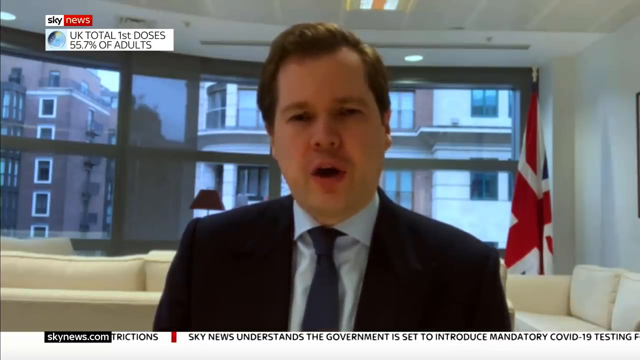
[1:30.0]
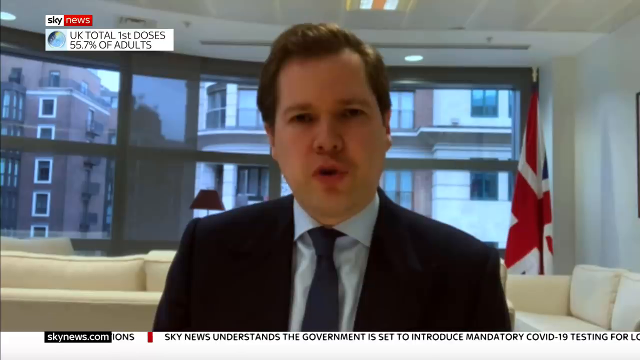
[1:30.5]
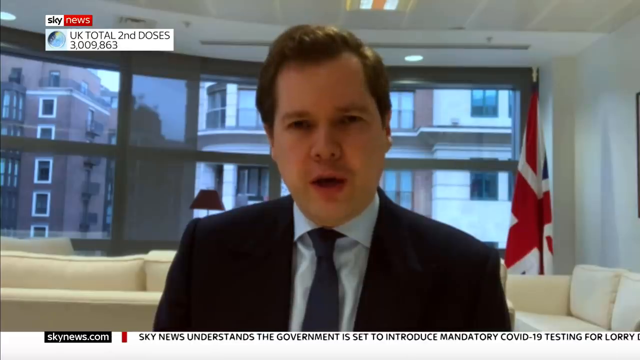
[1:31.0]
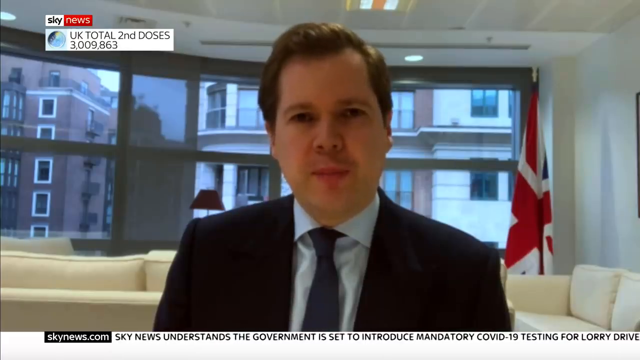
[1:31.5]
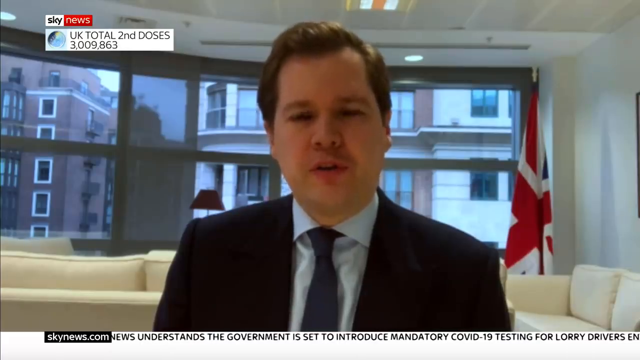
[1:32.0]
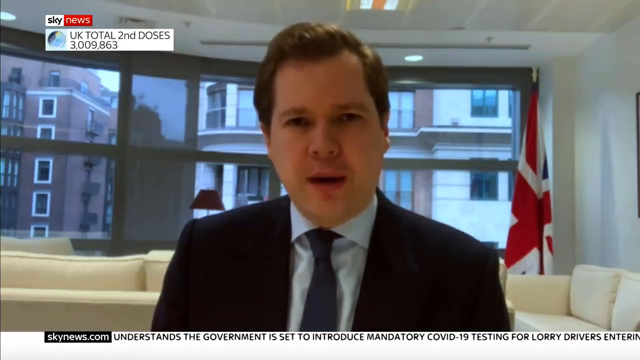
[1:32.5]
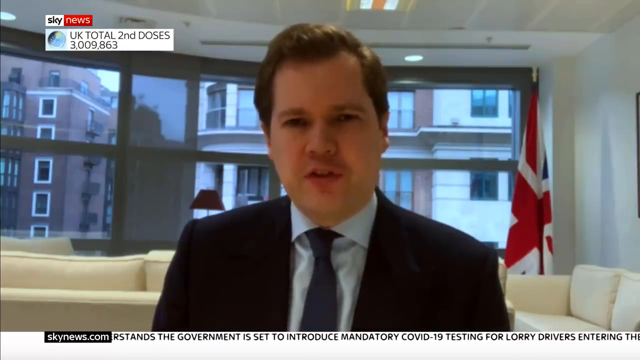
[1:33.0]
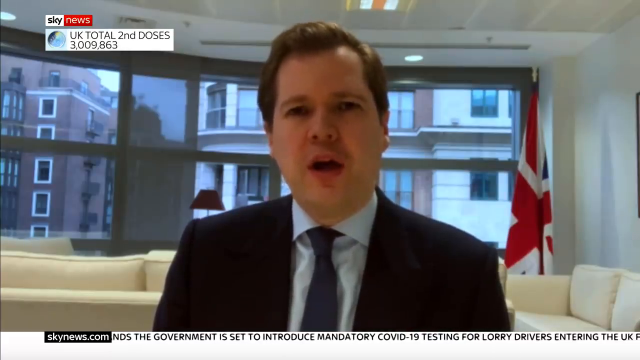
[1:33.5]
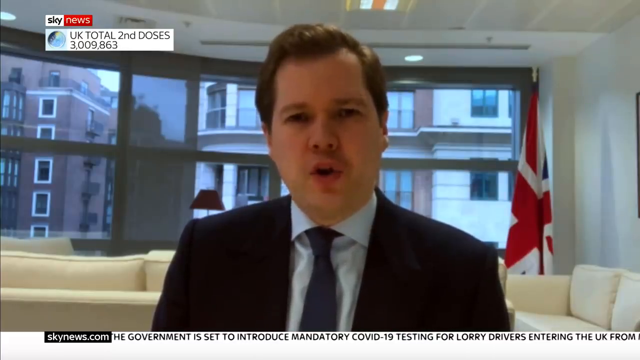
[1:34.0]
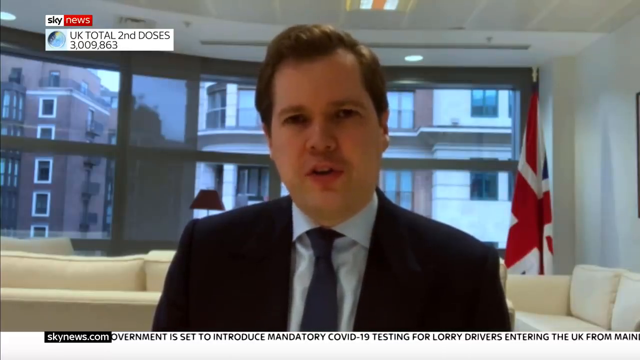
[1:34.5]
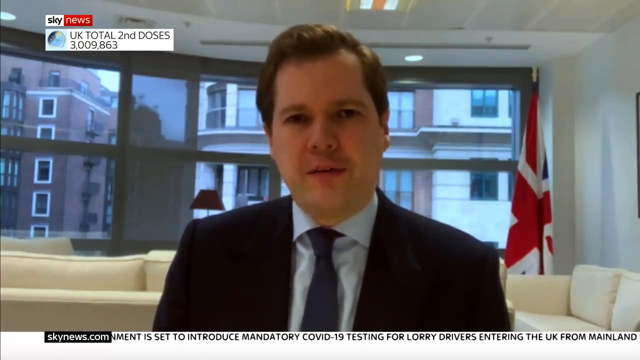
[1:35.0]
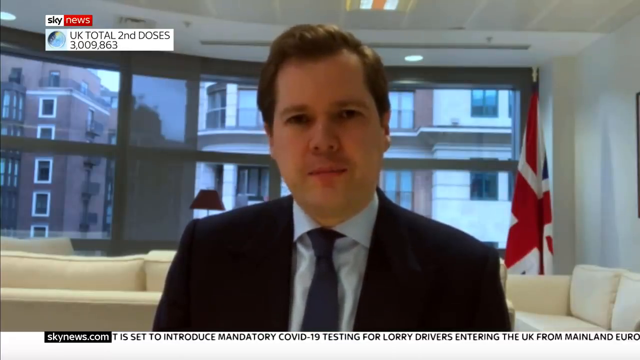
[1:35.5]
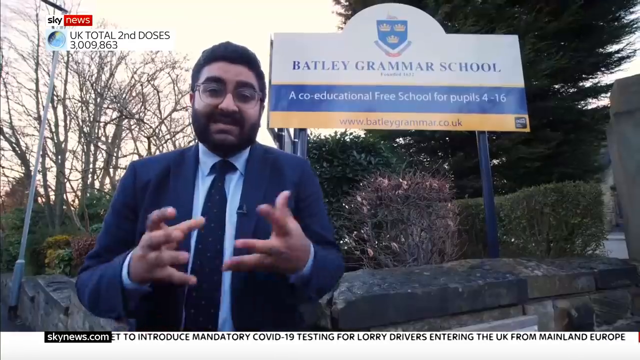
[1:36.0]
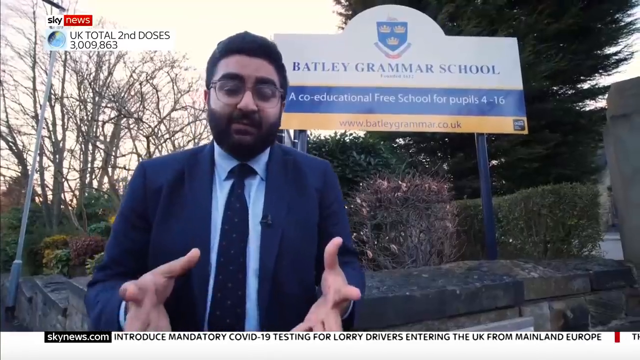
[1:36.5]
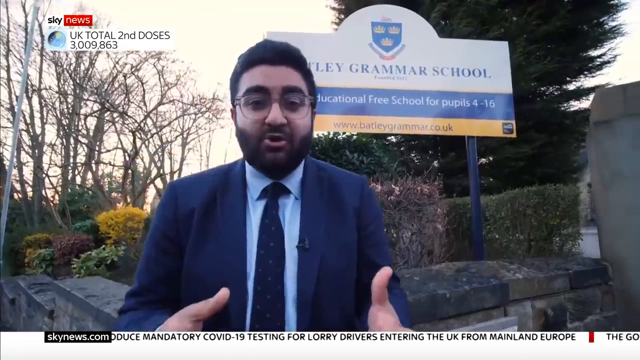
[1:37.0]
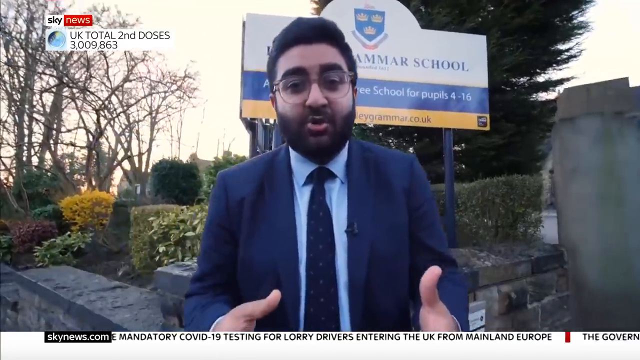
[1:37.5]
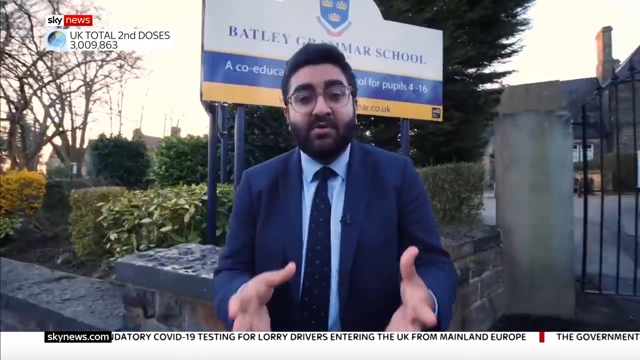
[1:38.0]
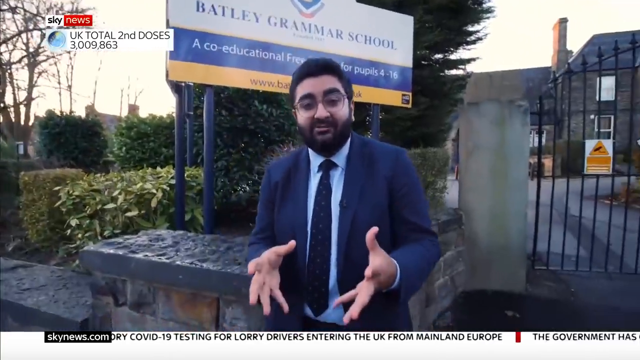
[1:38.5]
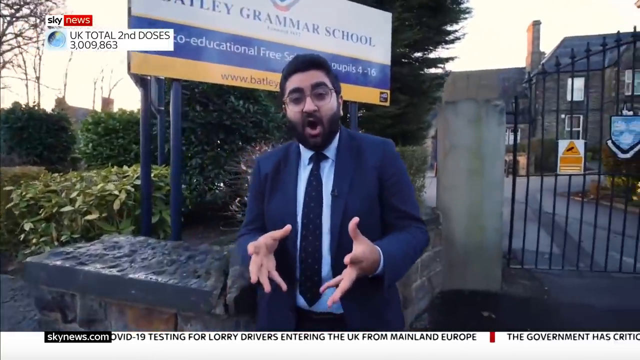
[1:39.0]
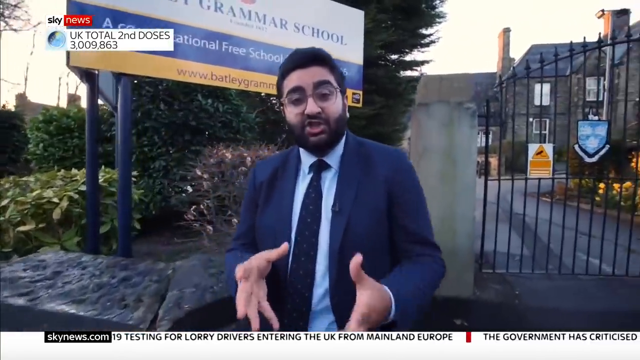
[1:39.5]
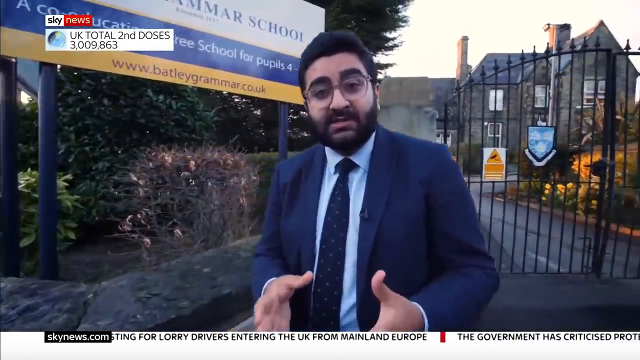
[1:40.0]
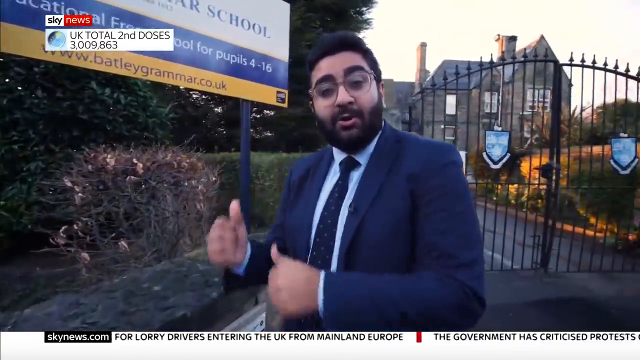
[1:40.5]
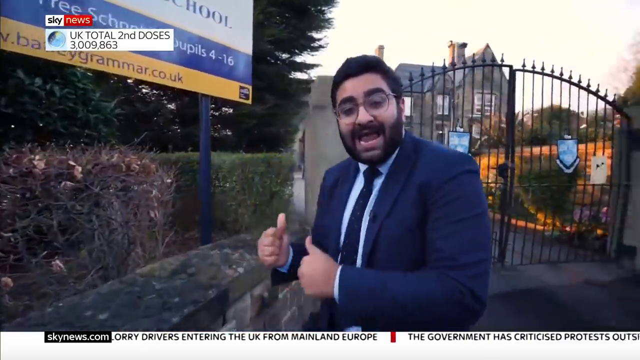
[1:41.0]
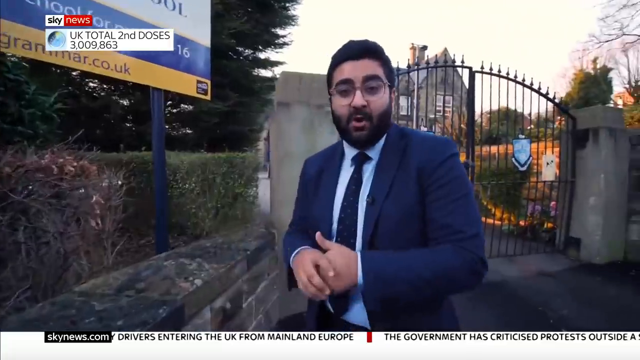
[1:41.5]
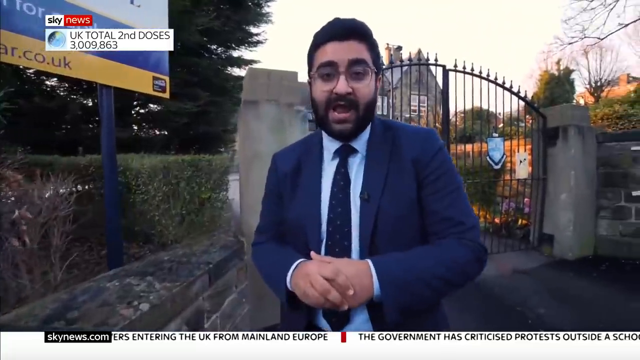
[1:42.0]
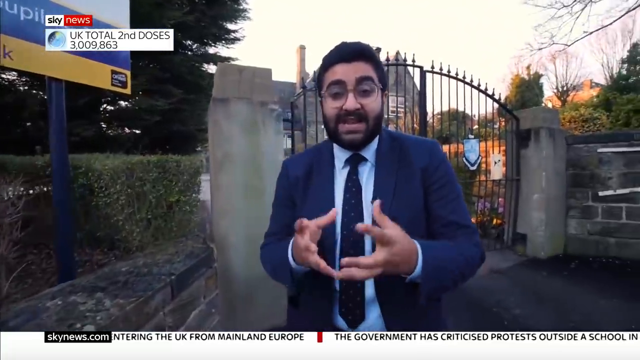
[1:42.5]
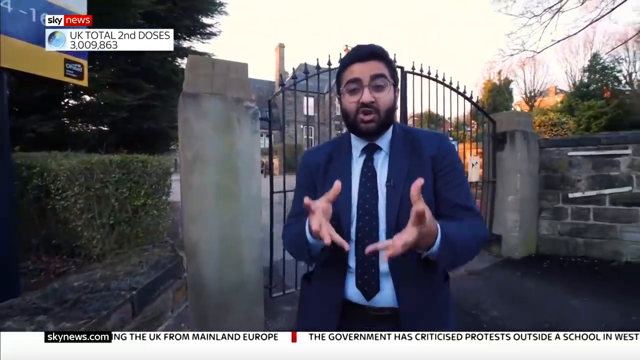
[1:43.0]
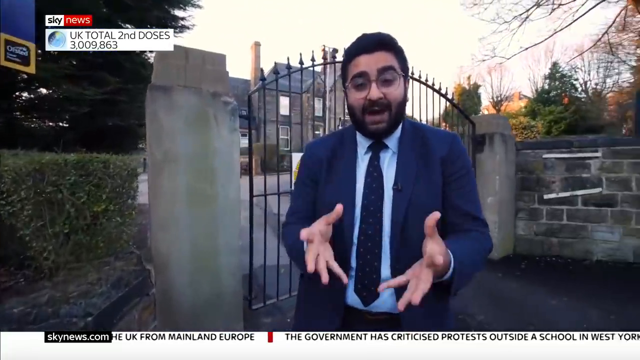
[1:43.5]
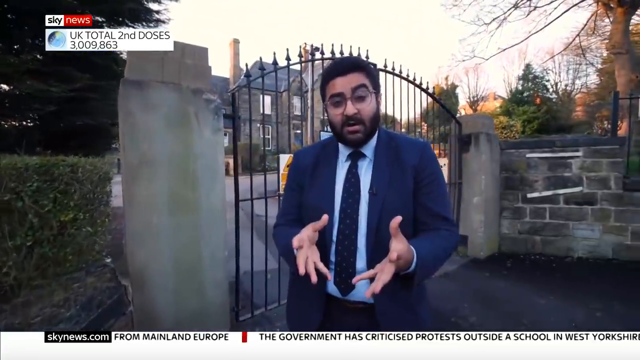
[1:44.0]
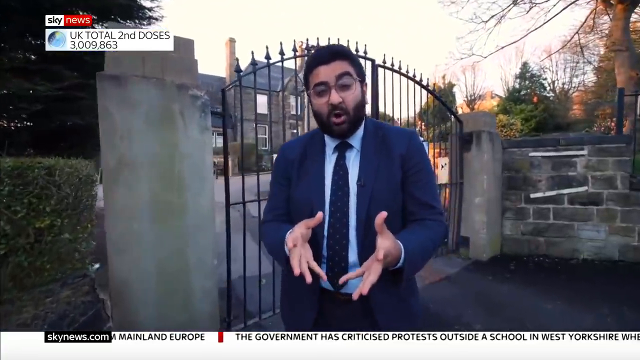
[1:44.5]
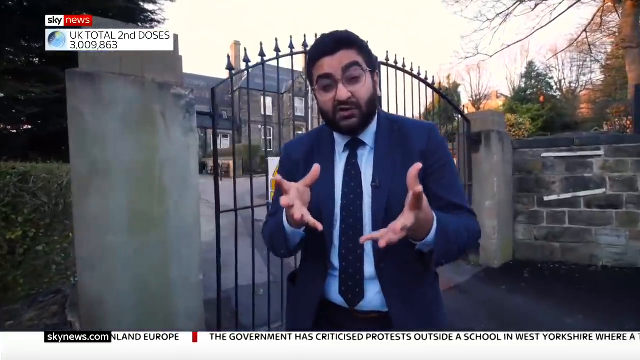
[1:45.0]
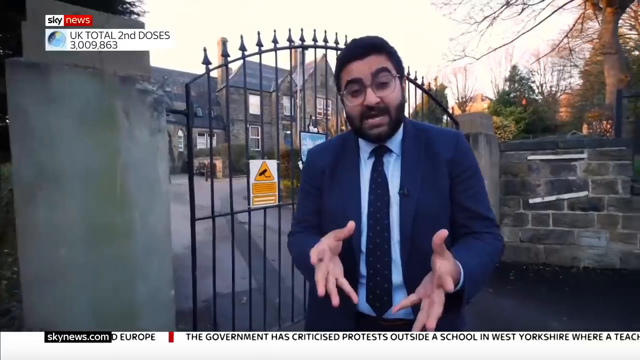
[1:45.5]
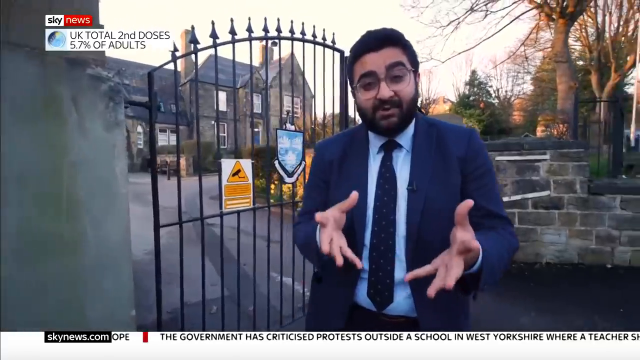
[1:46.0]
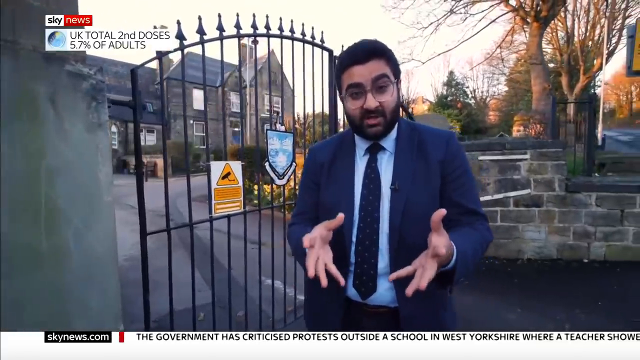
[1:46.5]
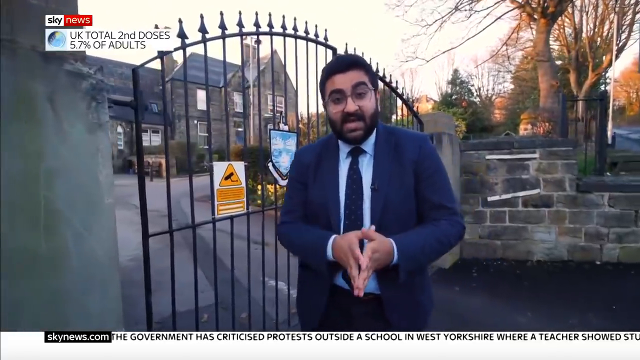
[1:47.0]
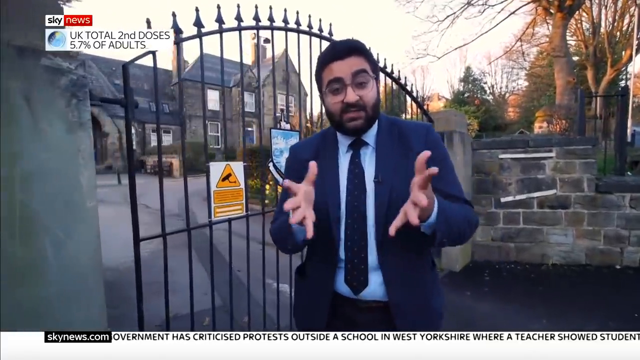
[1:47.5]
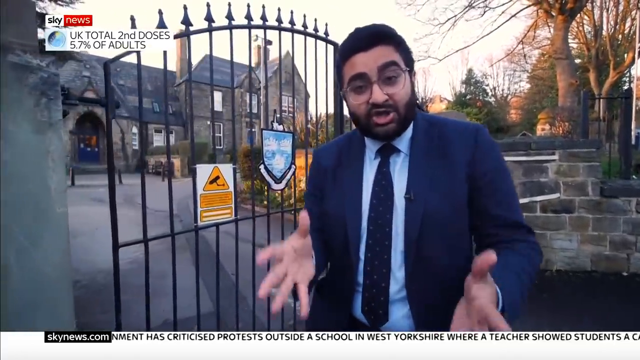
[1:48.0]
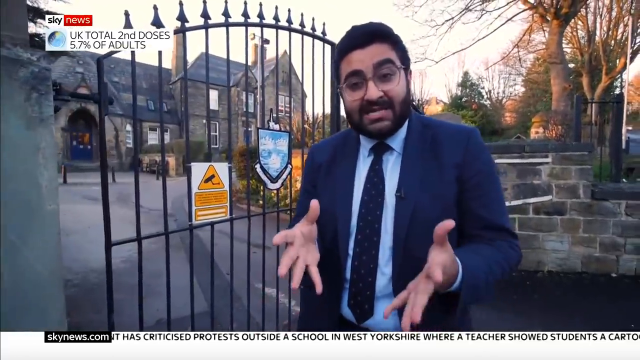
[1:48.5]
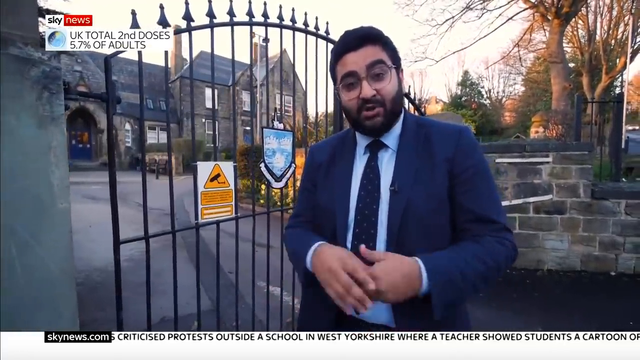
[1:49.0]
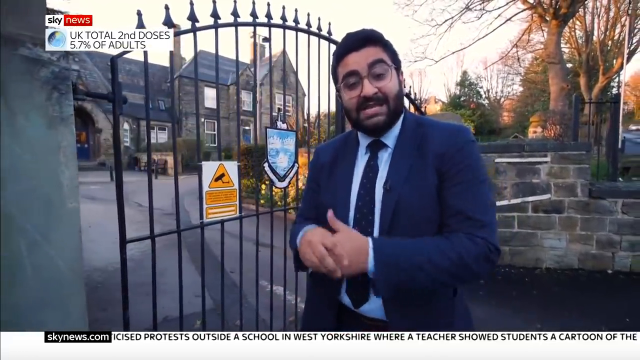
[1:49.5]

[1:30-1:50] The Sky News logo is in the top left, with "UK data first doses 55.7% of adults". The news anchor is in the middle, wearing a suit, a blue tie and a blue shirt, with the UK flag on the right. Through the windows of the room, buildings are visible, and the seats are white. The man is speaking. The scene shifts to another news presenter at the school, with "UK total second doses 3,986,003" on screen. He stands at the school gate, and the camera follows him as he talks and points to the gate. The gate is closed with chains, nothing is inside, and the place is abandoned.